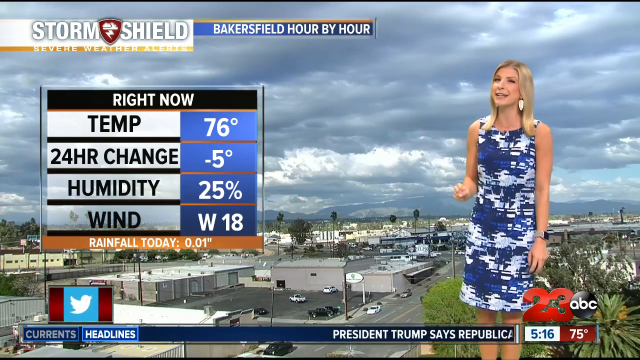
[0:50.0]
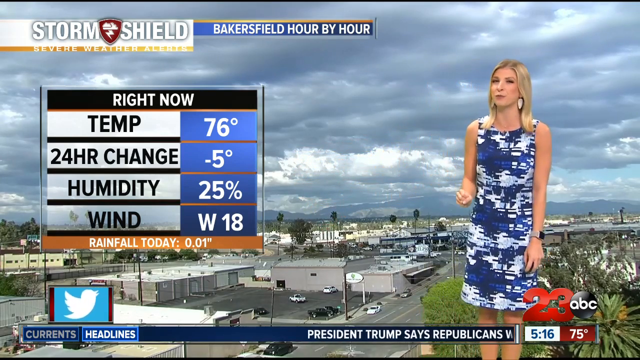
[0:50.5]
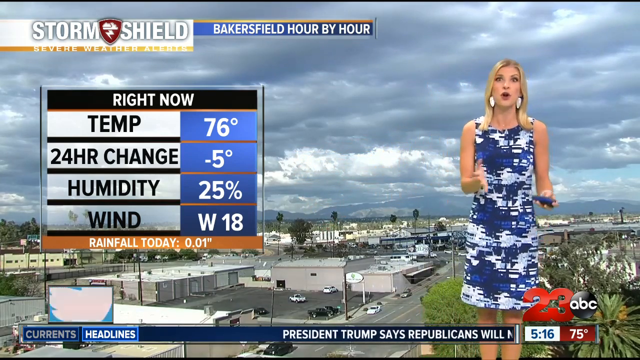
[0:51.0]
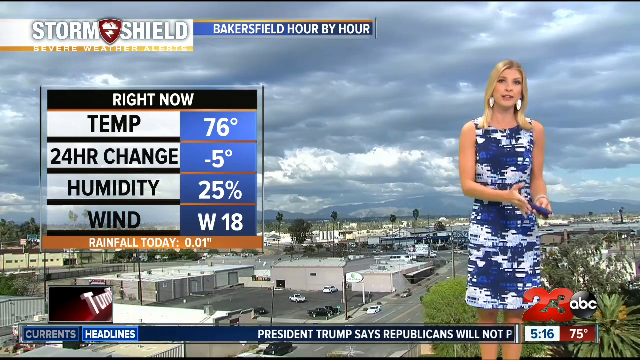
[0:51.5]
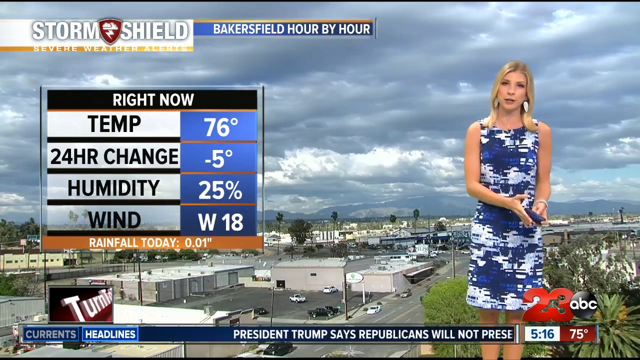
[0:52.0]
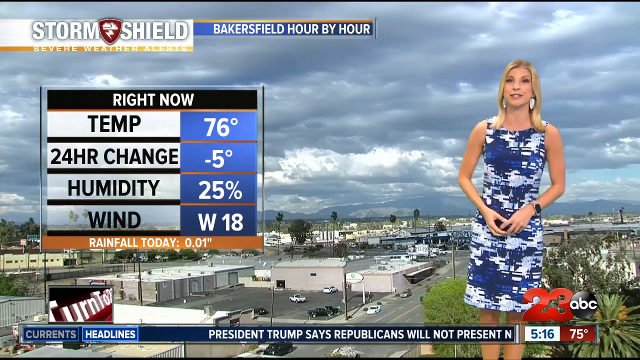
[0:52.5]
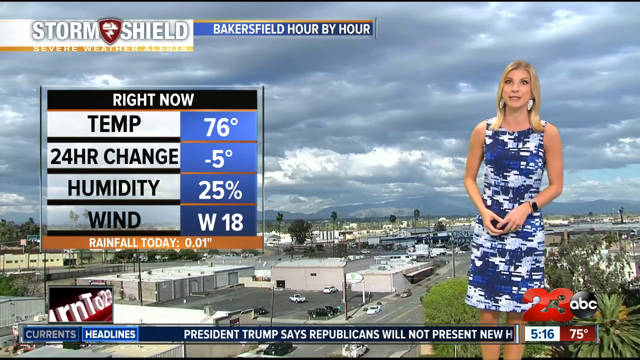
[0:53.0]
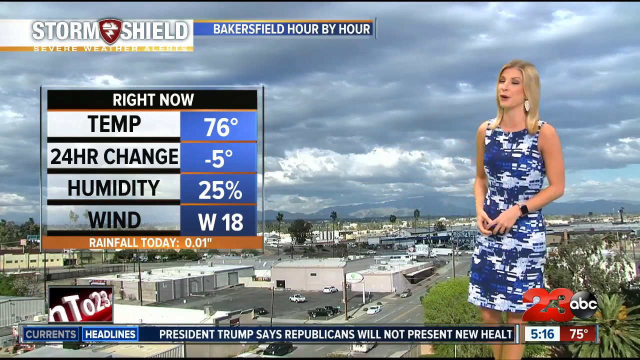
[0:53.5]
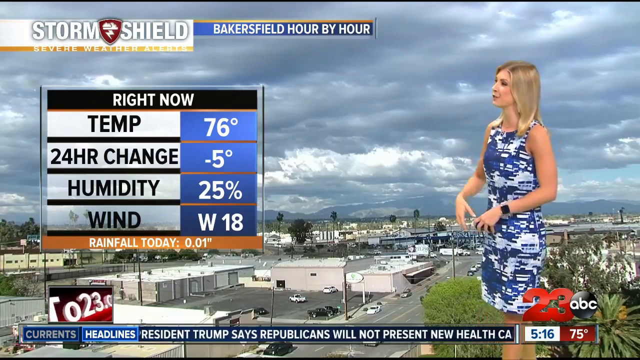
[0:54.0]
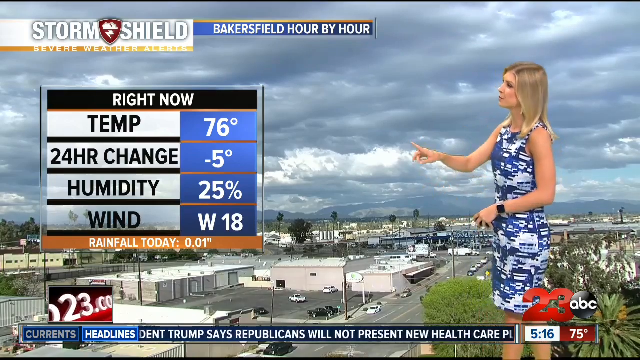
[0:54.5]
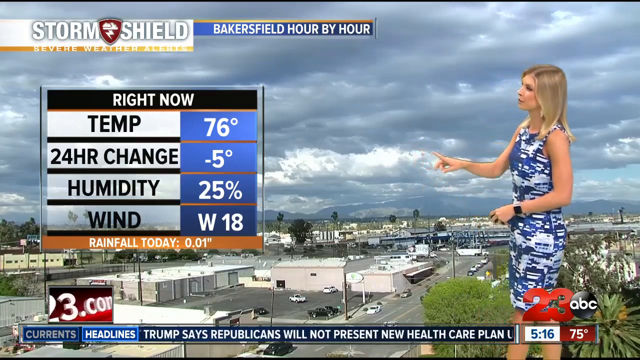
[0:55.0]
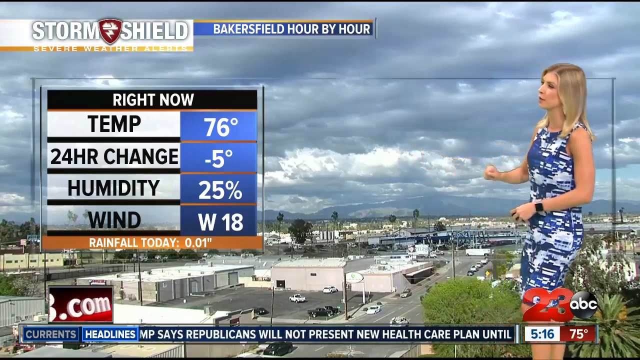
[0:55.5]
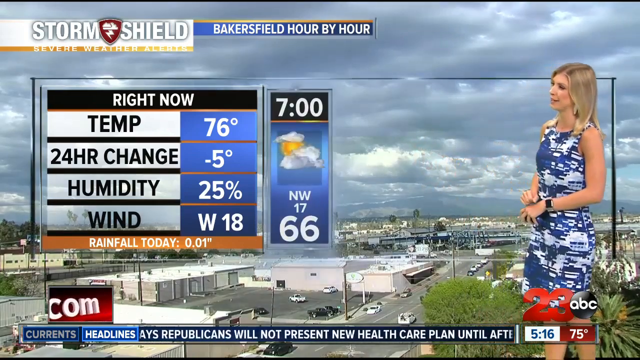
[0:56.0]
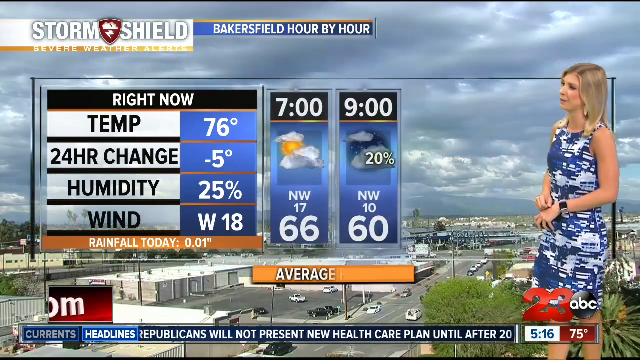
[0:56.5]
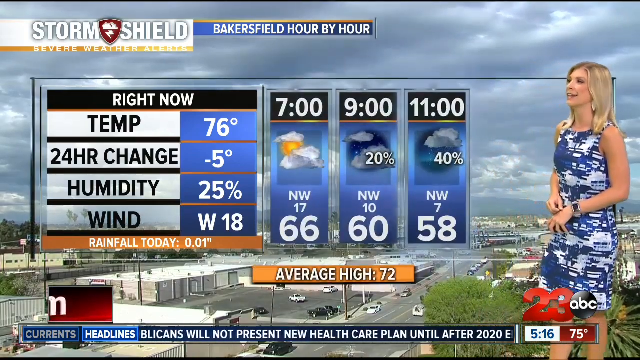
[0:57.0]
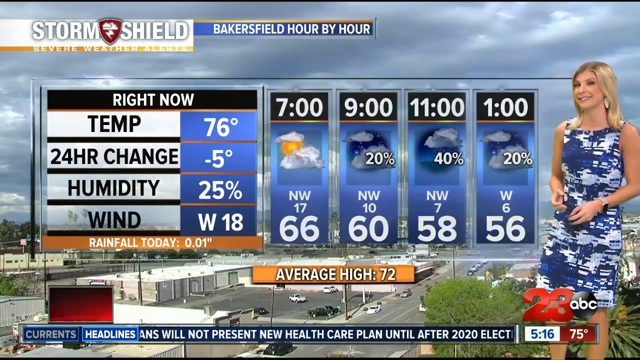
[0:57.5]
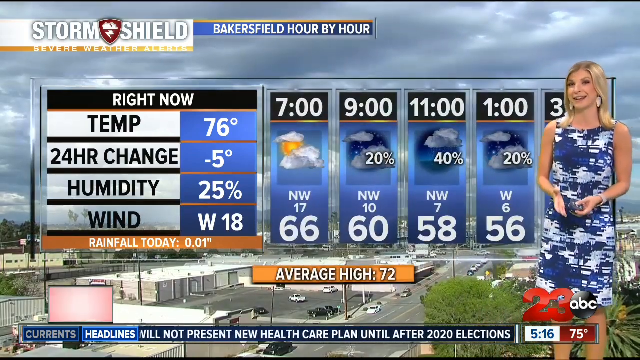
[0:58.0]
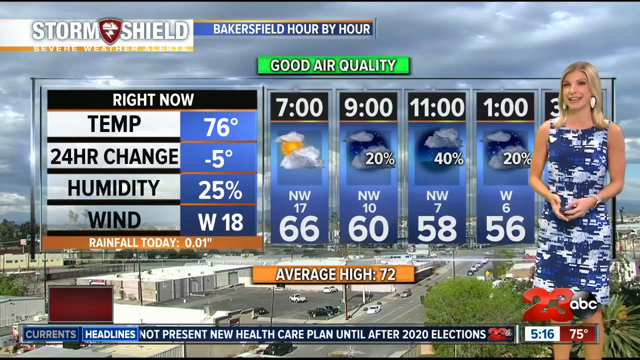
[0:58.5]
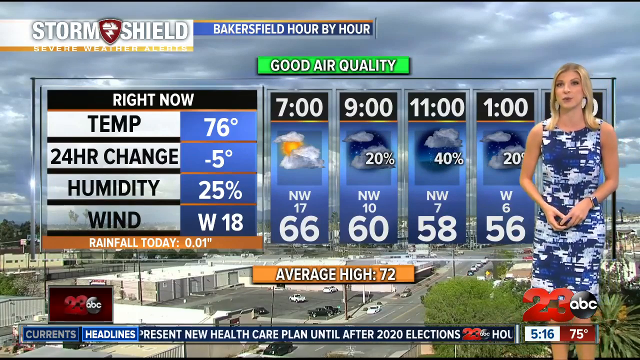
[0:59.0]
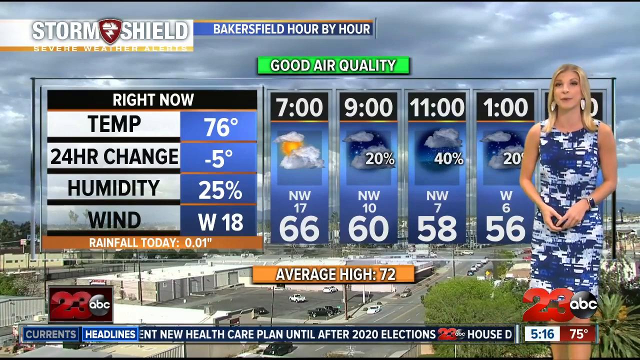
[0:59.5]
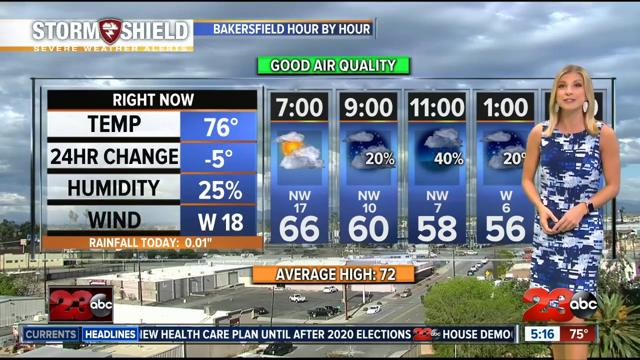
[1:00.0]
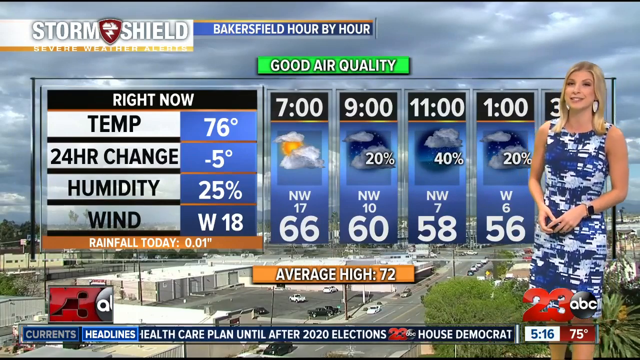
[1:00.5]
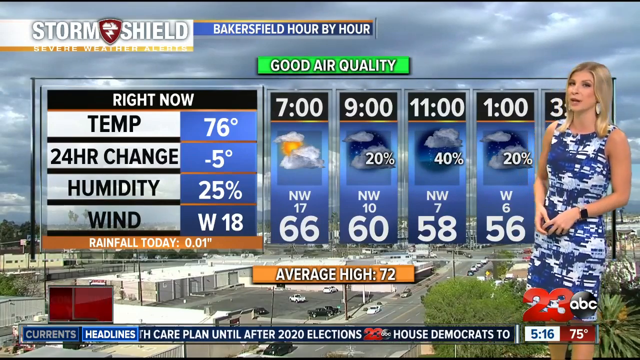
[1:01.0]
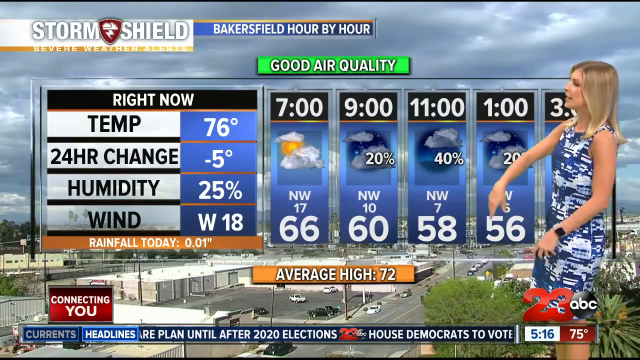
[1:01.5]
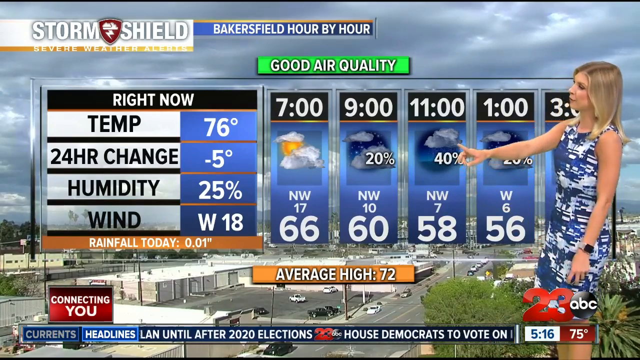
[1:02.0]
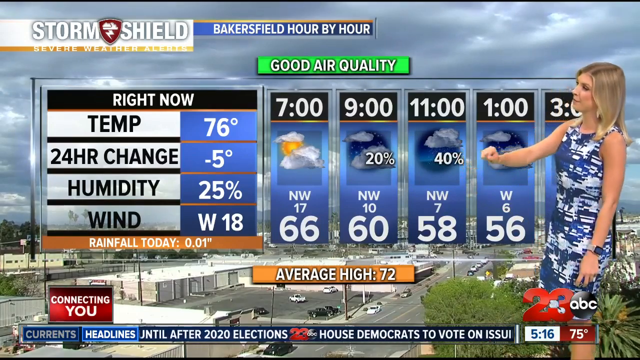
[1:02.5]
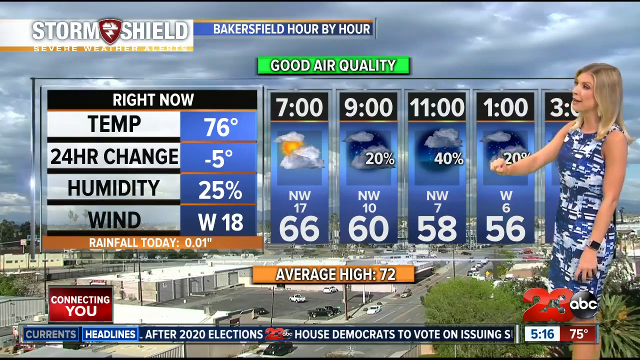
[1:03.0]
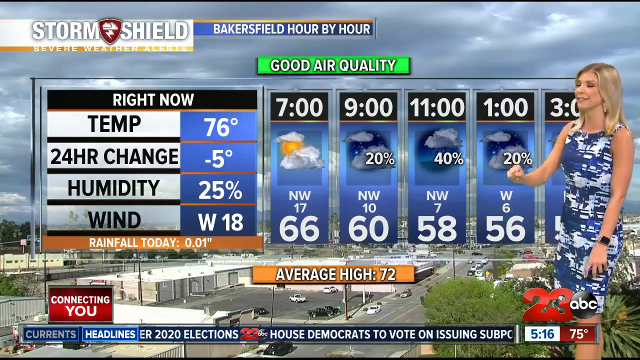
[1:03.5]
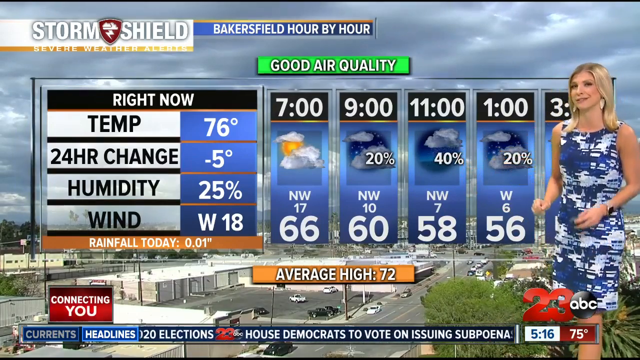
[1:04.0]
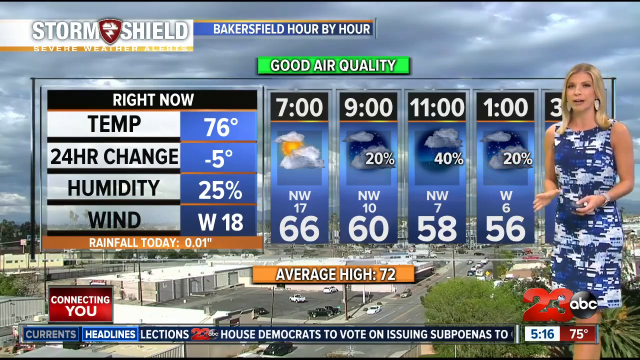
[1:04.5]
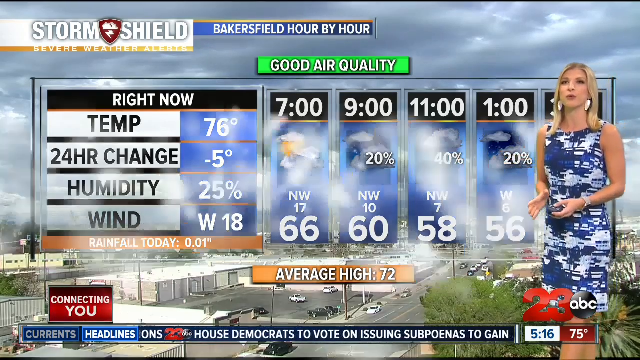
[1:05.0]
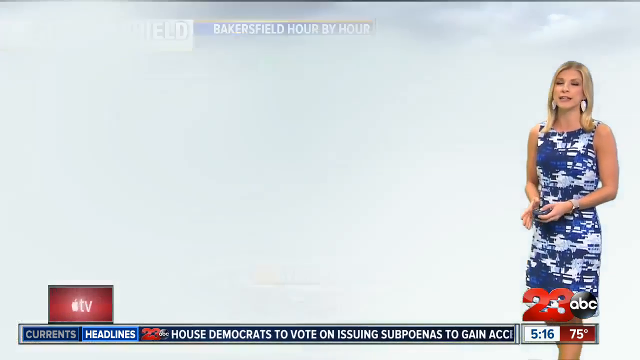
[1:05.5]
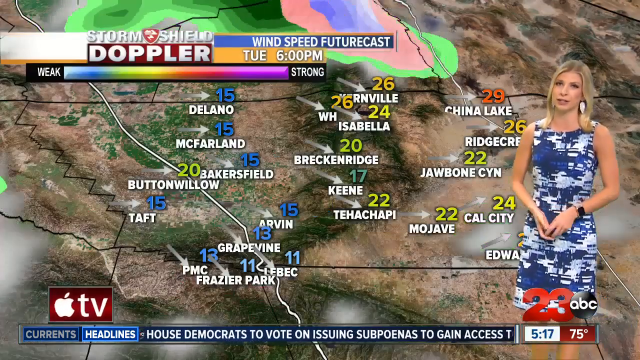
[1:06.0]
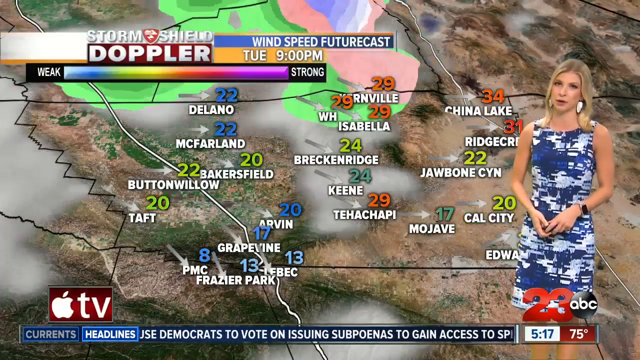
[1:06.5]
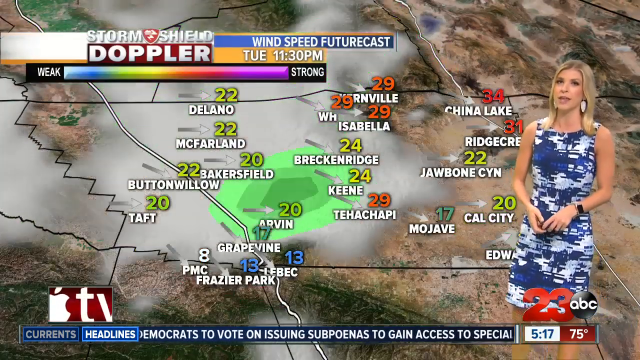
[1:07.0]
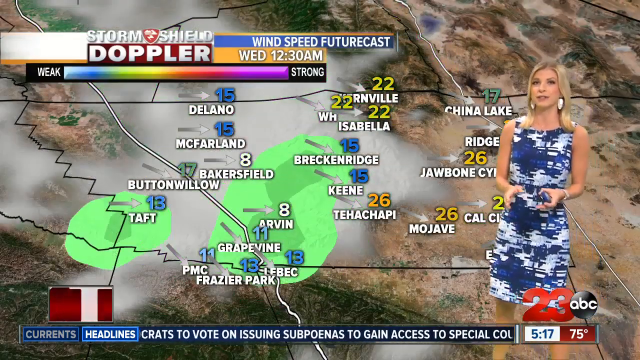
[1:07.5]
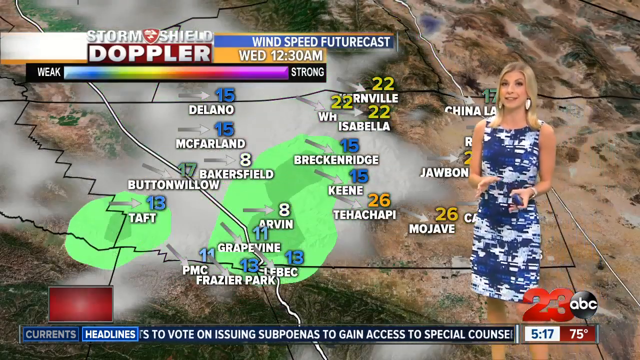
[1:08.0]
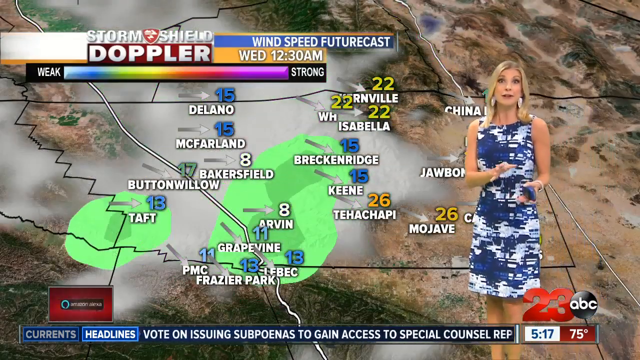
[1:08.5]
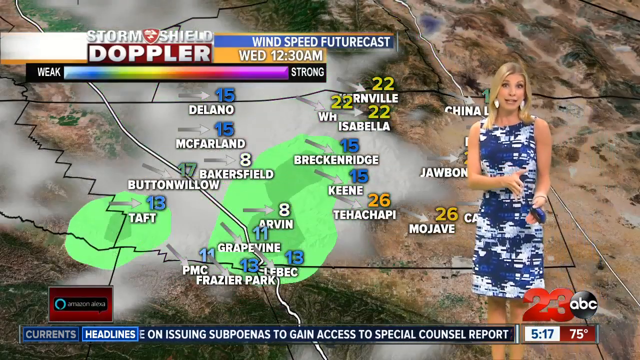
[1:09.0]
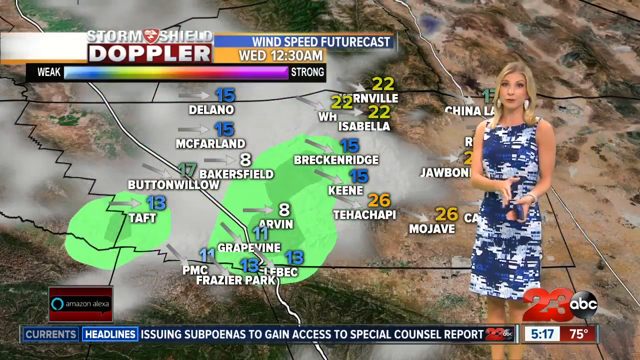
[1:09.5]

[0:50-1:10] The woman is still standing in front of the aerial view of Bakersfield, which looks like a town with many factory buildings. The news anchor is Caucasian, with blonde hair down to her collarbones, dangly earrings and her makeup done. She wears a dress that looks pixelated, in different shades of blue and white. A banner running along the bottom reads "President Trump says Republicans will not present new health care plan until after the 2020 election." A new graphic then shows the weather hour by hour, with a green box reading "good air quality." At seven it looks like it will start getting cloudy; at nine there is a 20% chance of rain, at eleven 40%, and at one another 20%. Along the bottom it apparently gives temperatures and the direction the wind will blow, and it says the average high is 72.